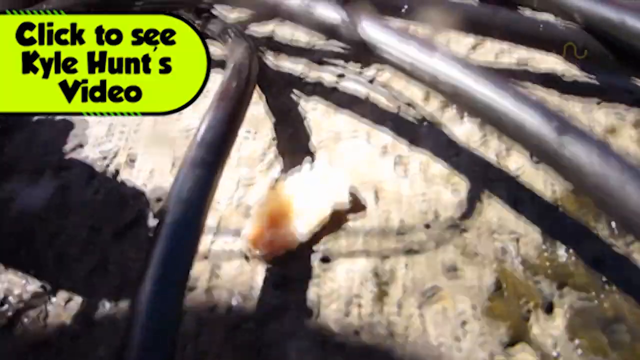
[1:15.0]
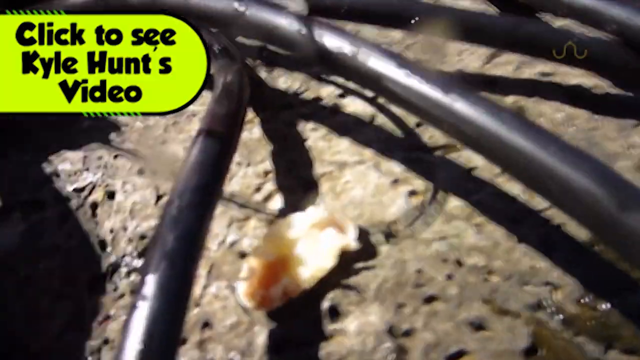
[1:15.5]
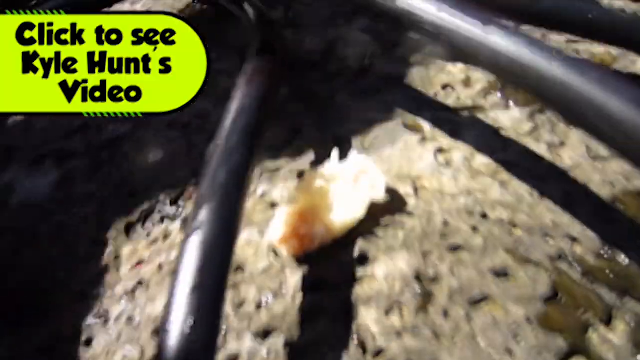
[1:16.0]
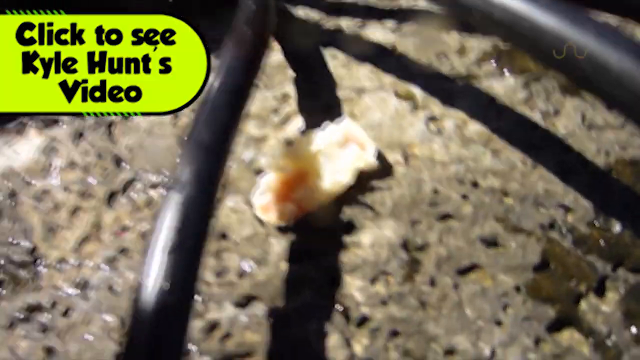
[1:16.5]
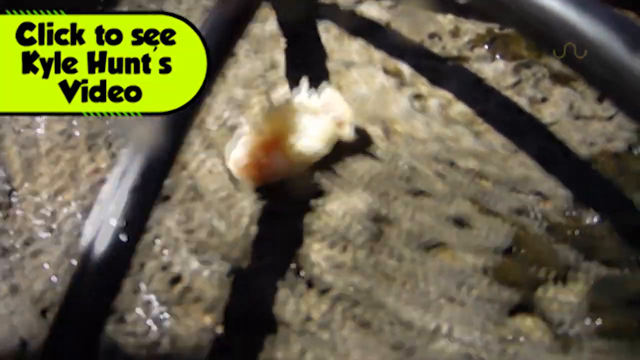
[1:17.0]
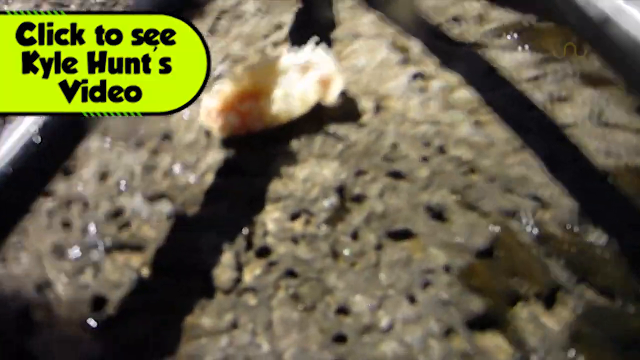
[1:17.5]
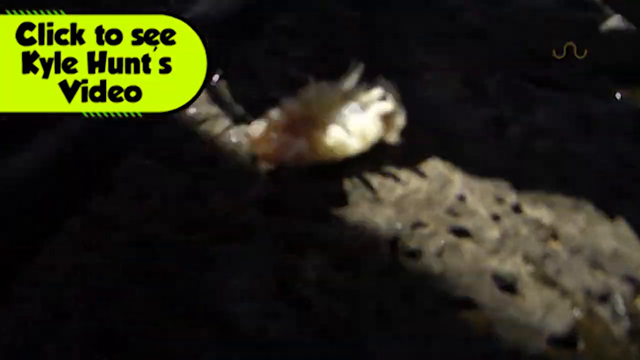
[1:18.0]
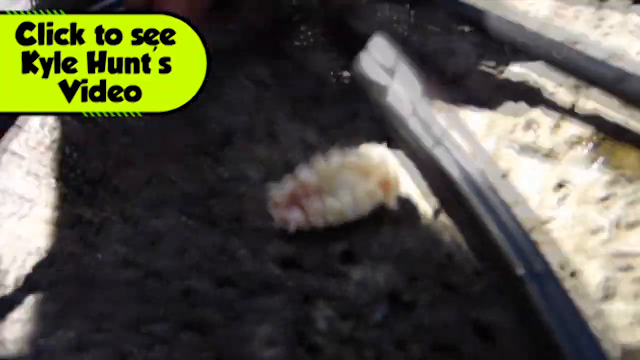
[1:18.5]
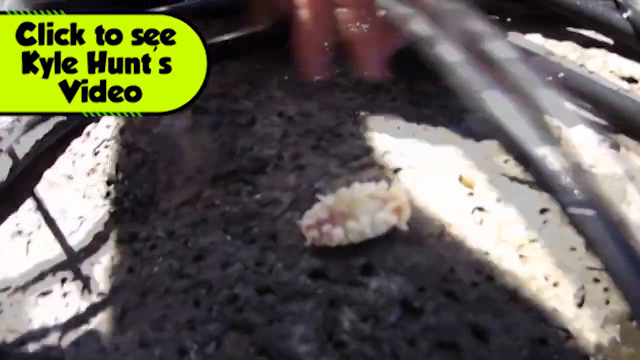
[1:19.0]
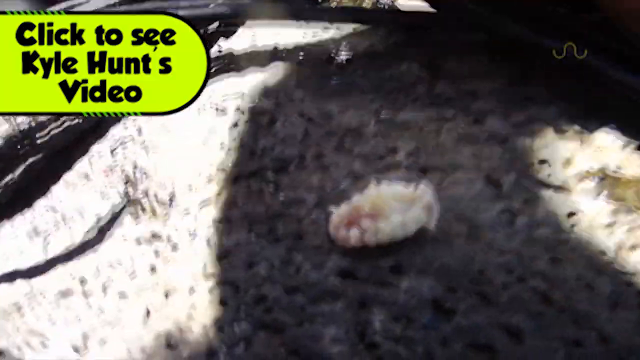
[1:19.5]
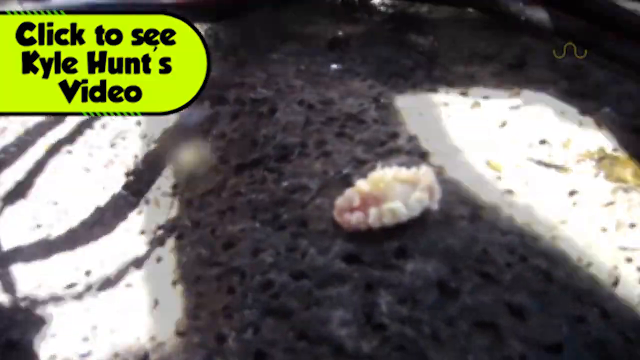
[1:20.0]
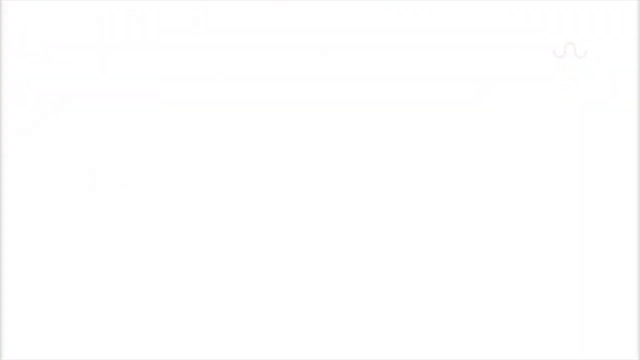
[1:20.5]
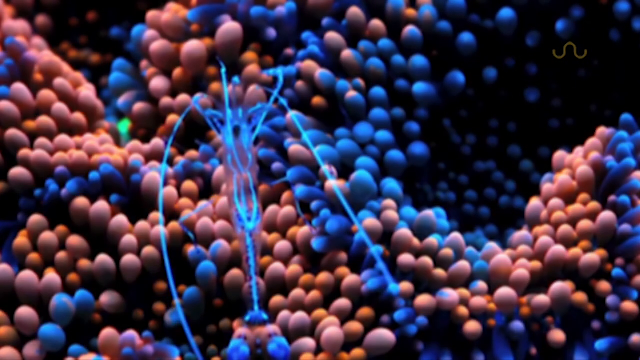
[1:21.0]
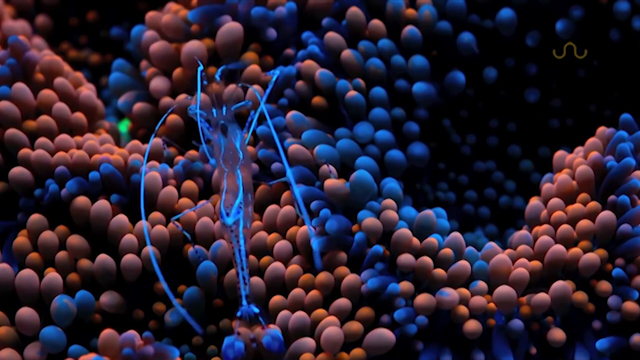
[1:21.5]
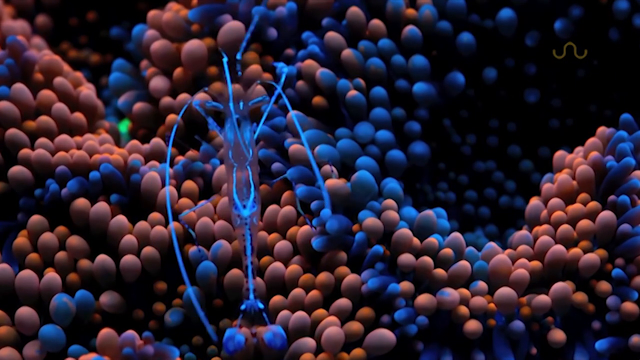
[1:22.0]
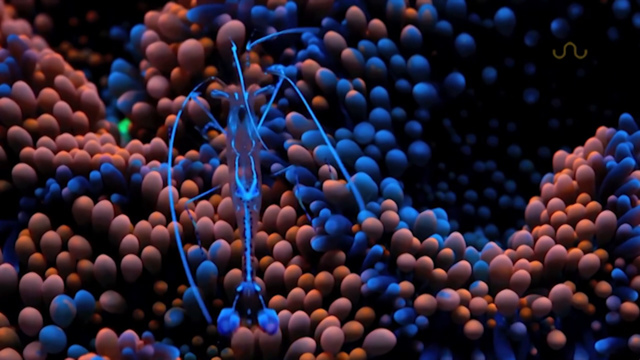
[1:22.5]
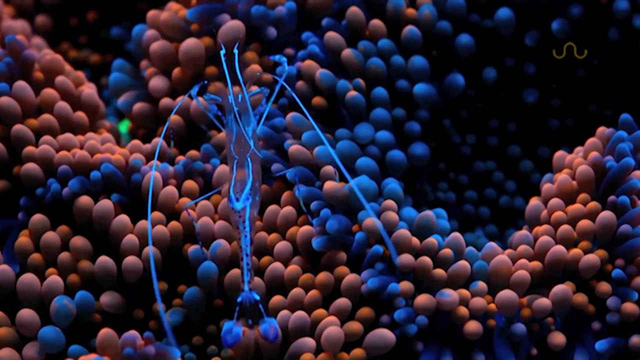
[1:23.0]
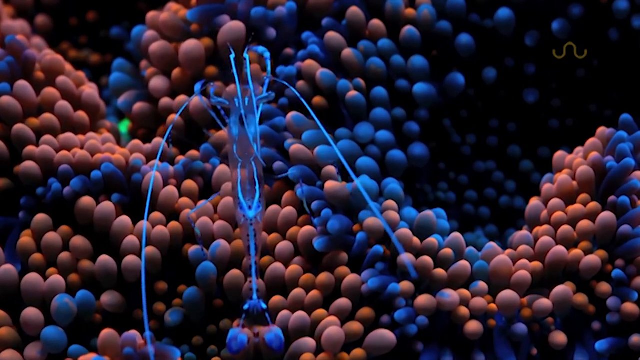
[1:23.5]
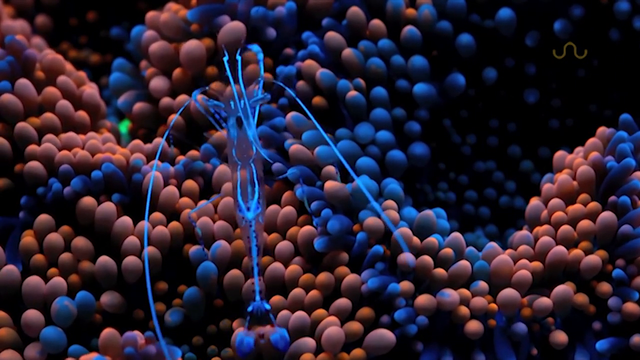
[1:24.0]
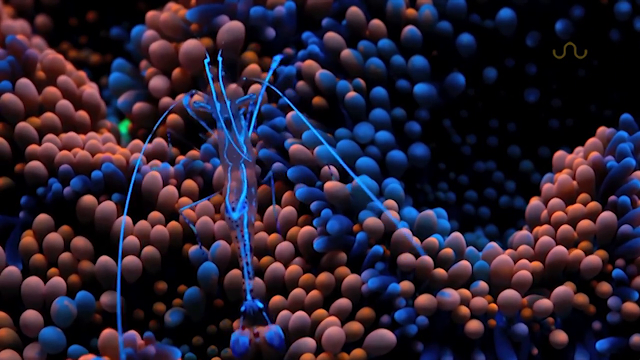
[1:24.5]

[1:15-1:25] The louse, removed from the fish's mouth, lies on the ground with its legs flailing around. Text reading "click to see Kyle Hunt's video" appears in the top left corner on a green background. Next comes a background of blue and red, possibly coral, apparently underwater, with a creature that might be a shrimp. It is transparent, appears to have a white, light-colored bone structure, and is hanging out underwater; it is hard to tell what it is doing.